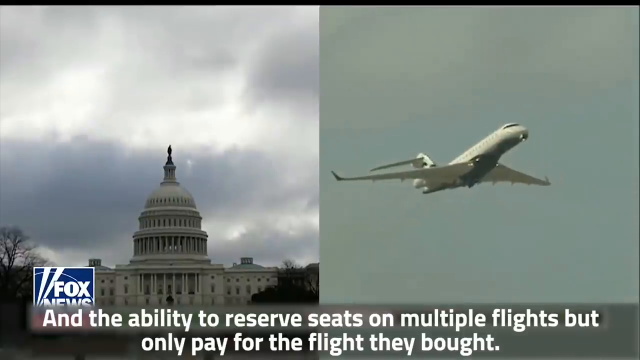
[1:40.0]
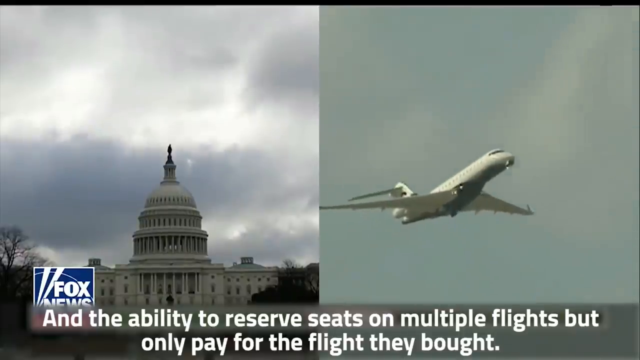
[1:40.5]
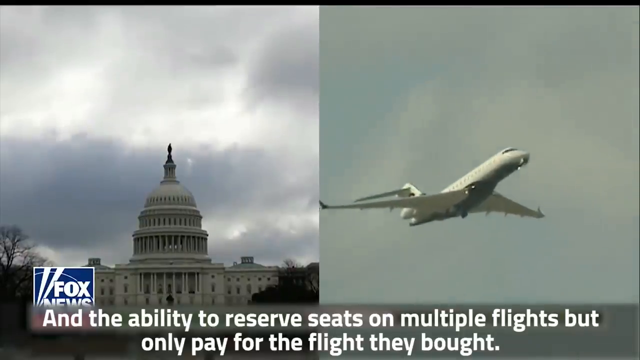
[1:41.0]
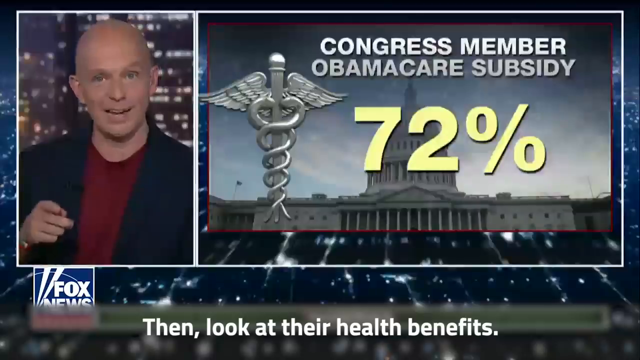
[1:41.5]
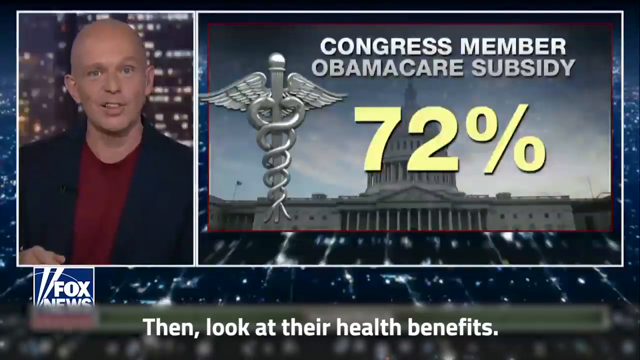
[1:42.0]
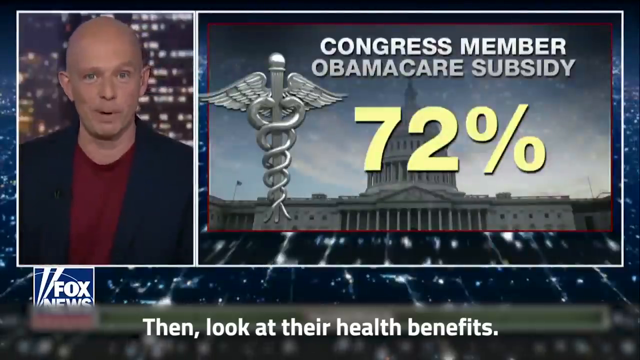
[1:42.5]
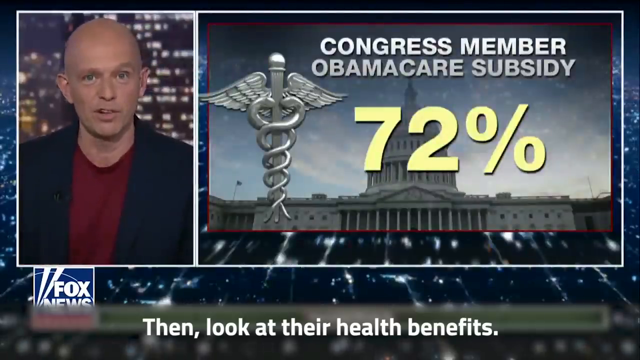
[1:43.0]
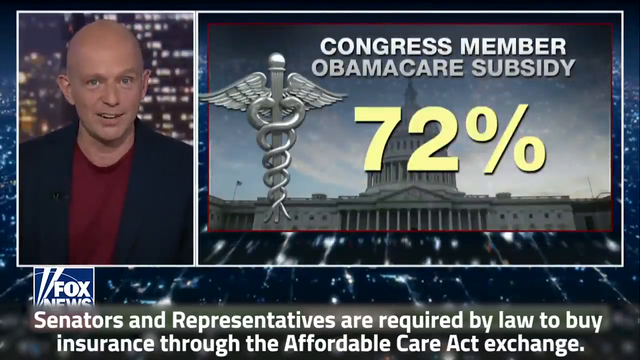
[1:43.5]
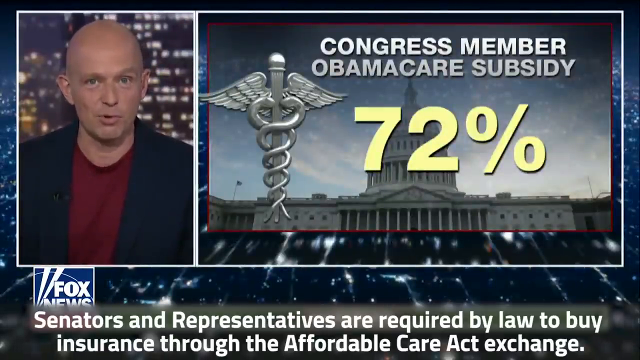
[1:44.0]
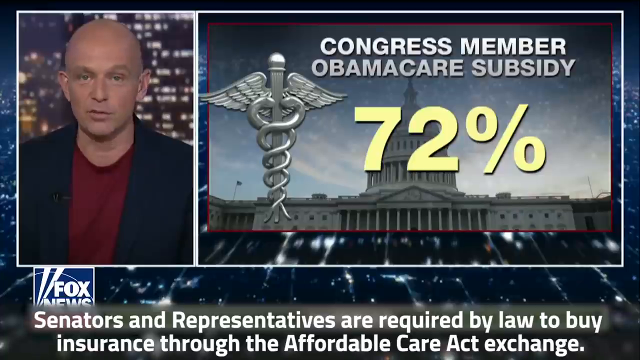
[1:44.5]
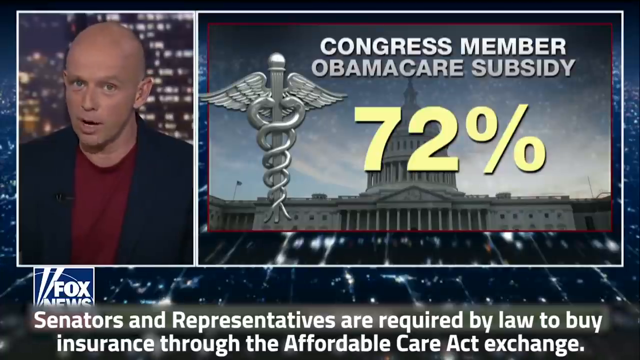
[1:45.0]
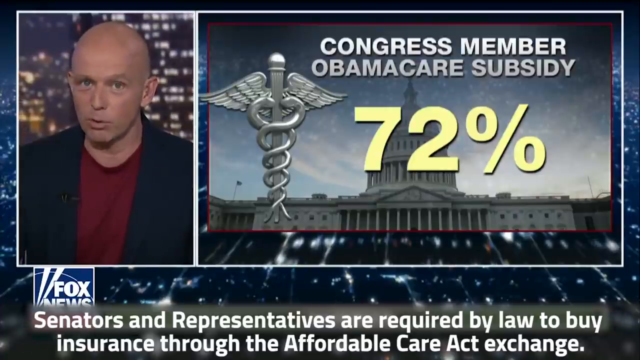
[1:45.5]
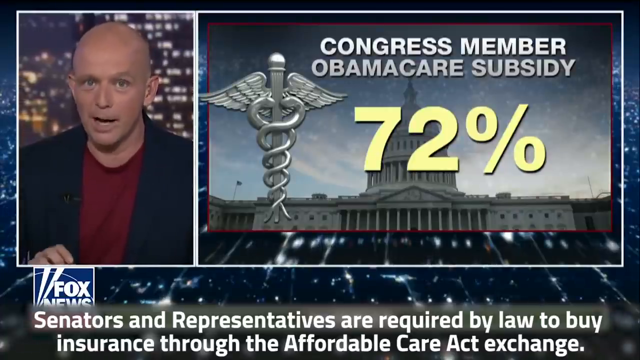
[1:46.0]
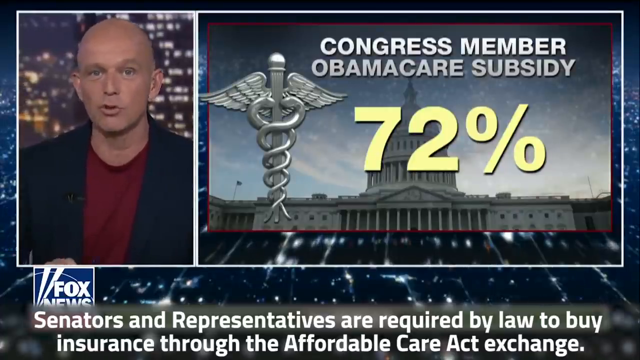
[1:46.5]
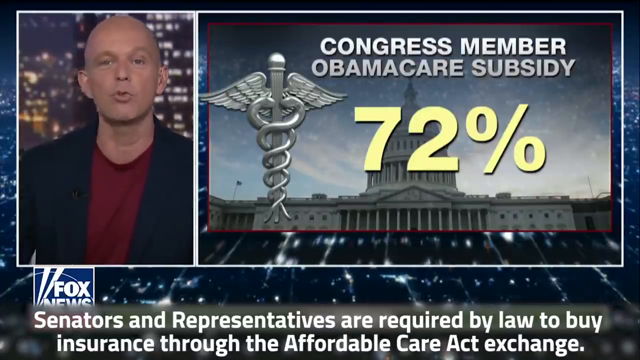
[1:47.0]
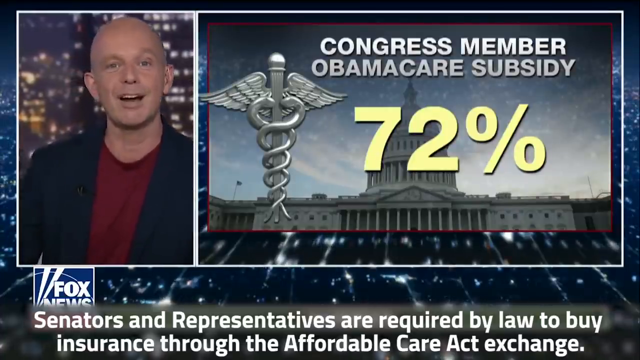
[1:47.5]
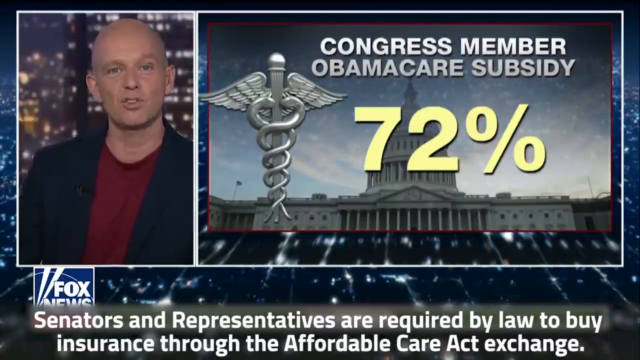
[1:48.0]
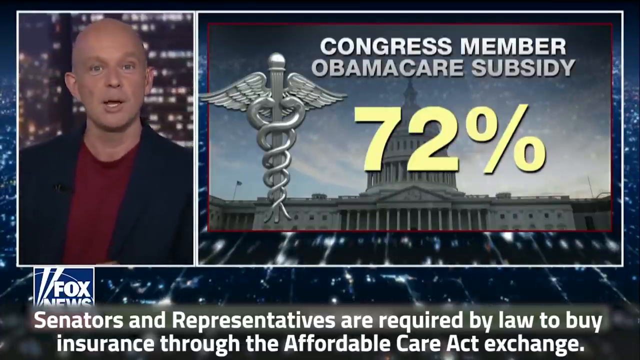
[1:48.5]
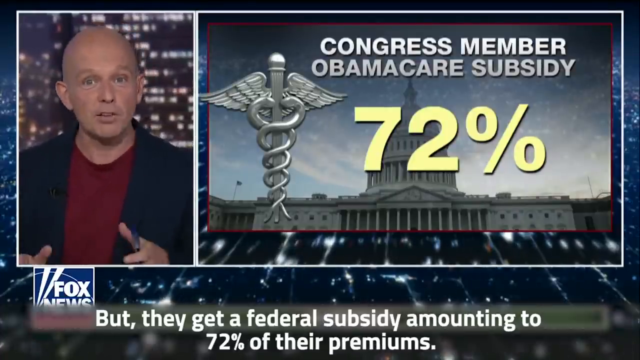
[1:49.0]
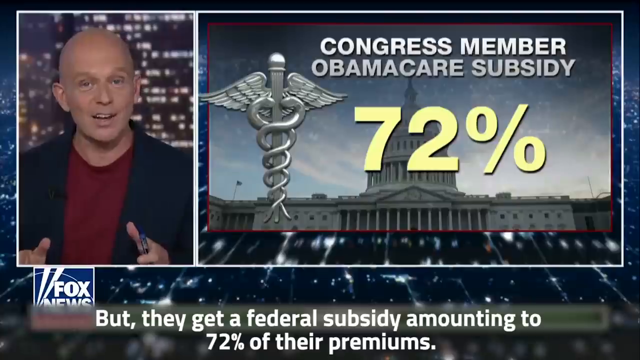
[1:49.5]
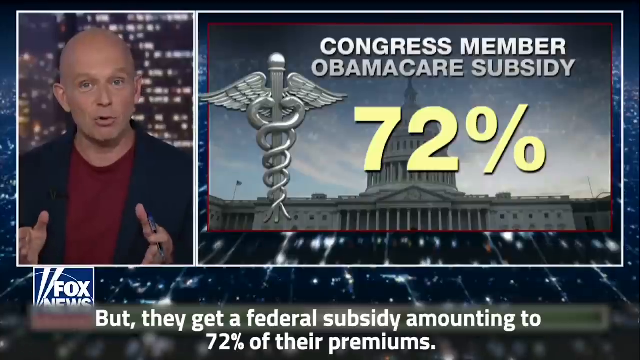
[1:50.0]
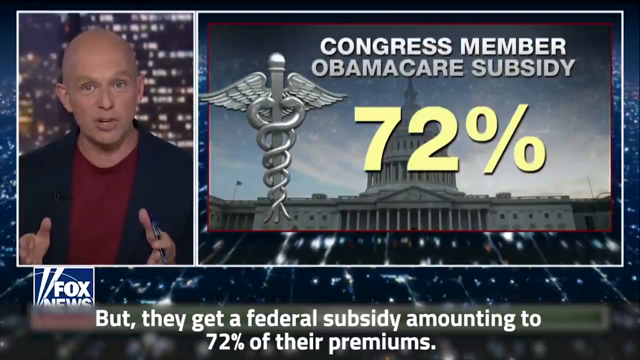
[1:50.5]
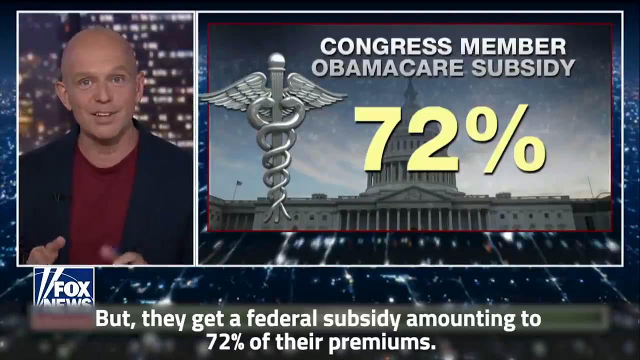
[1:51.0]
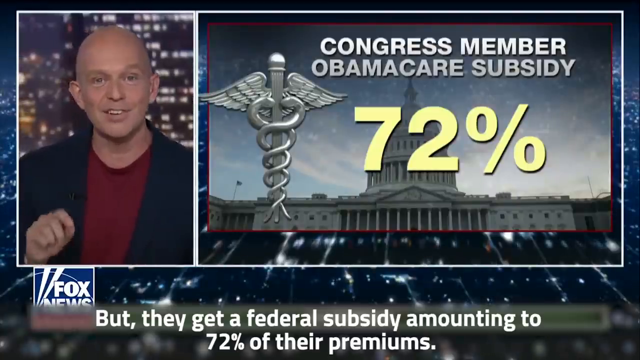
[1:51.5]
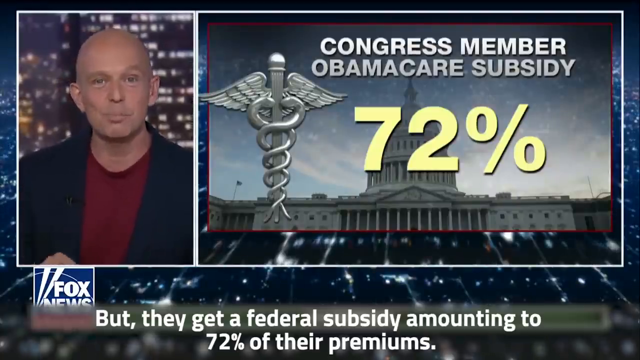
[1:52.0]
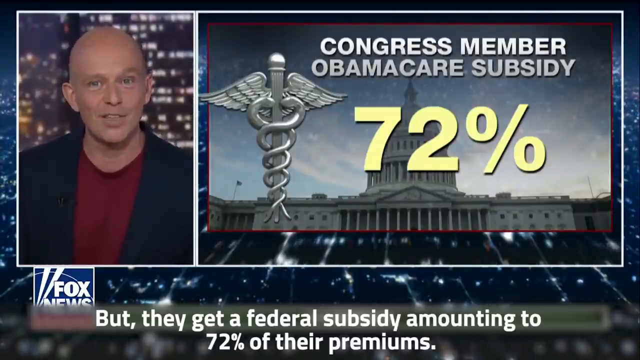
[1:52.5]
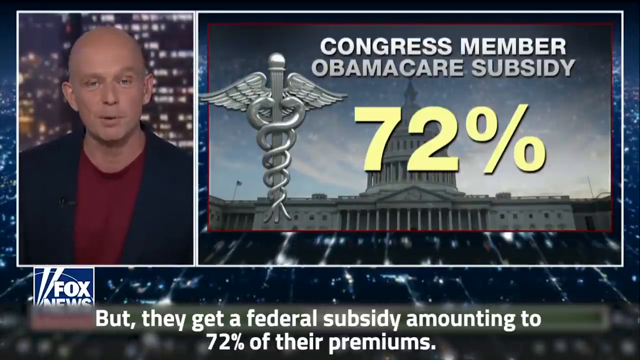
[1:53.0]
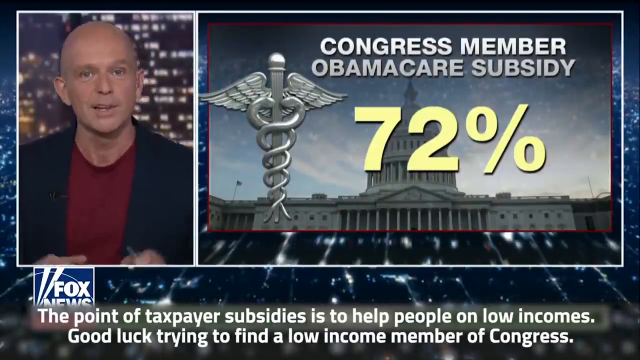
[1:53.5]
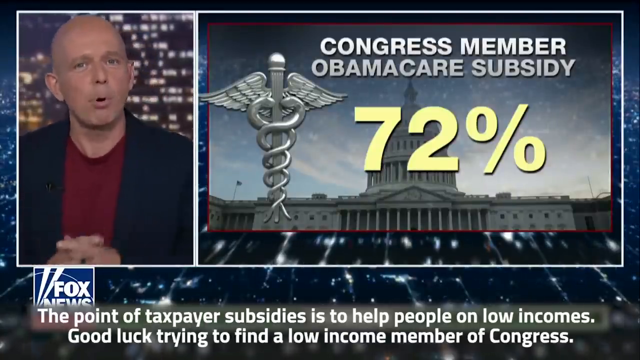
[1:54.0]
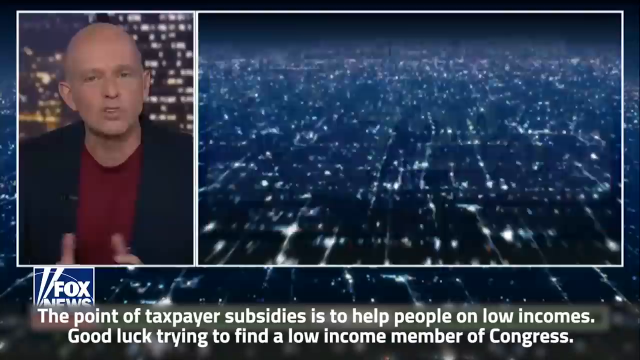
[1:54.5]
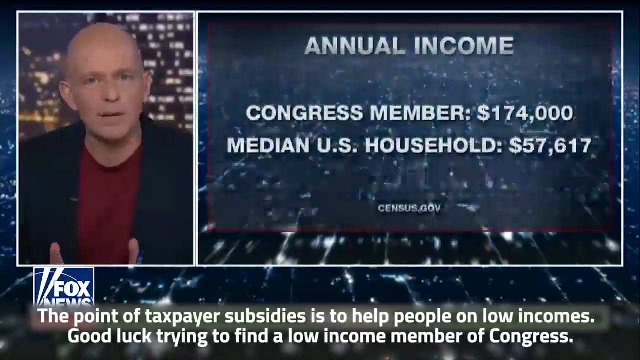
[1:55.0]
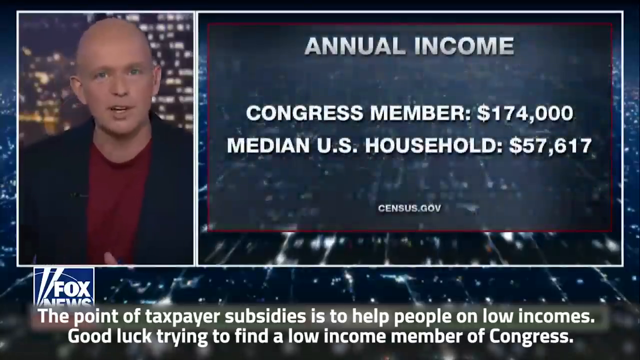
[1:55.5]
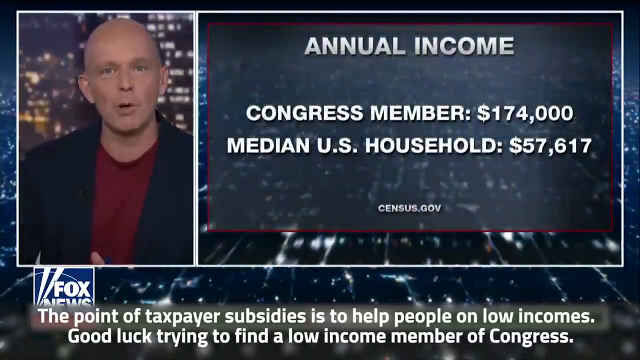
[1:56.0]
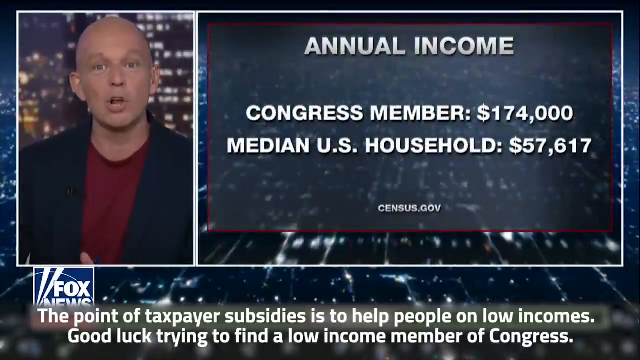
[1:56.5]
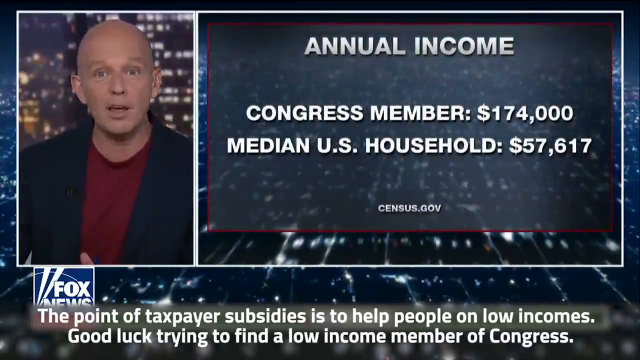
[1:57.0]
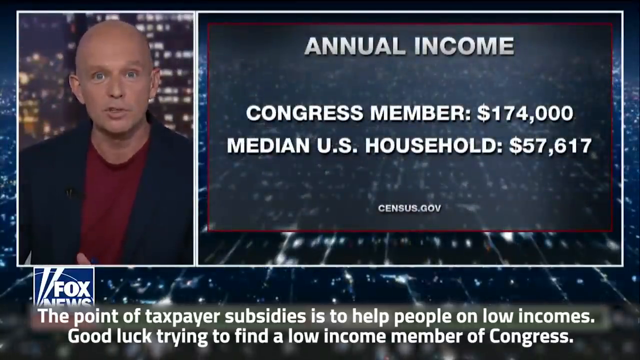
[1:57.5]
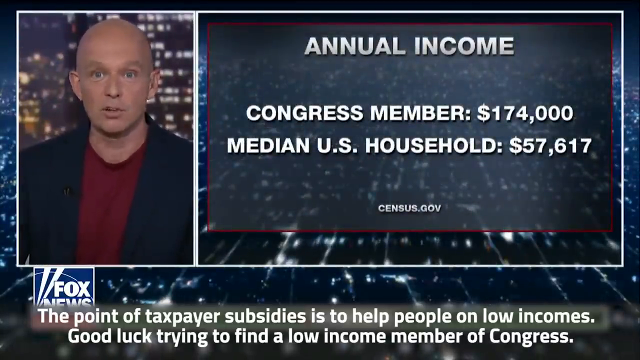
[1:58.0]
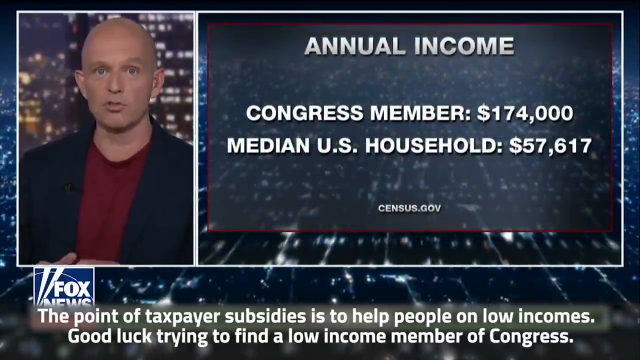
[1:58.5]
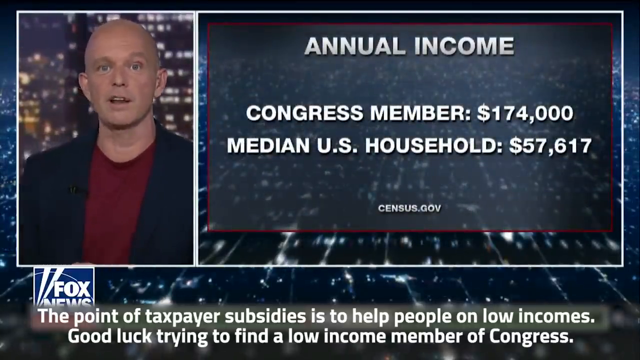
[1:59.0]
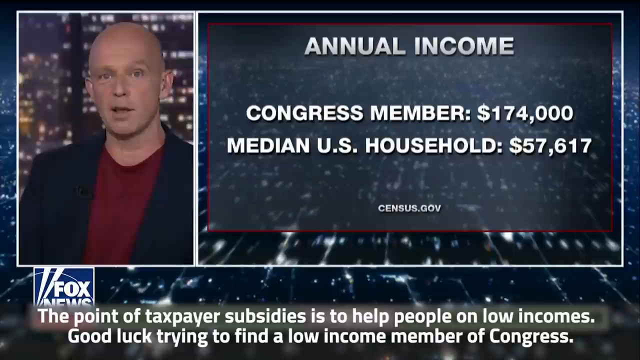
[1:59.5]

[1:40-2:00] The Fox News presenter is a white man in a maroon shirt and a blue jacket. On-screen text reads "we elect" members of Congress "to represent our interest, but they spend most of their time and our money," followed by a mention of a leaked PowerPoint slide from the 2013 congressional orientation stating that every member spends four hours, plus additional hours of strategic outreach. The video is split into two parts, one showing the presenter and the other showing the schedule. A New York Times item about Steve Israel, "Confessions of a Congressman," from 2016, is shown, stating that a fund-raising consultant advised that if he did not raise at least 10,000 a week, he would not be back.